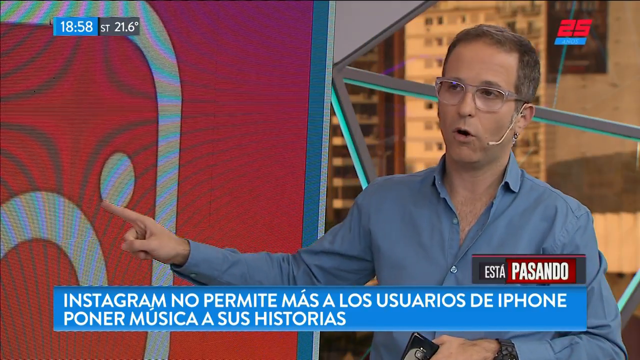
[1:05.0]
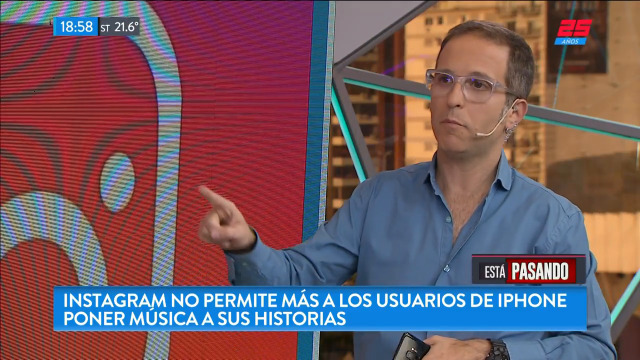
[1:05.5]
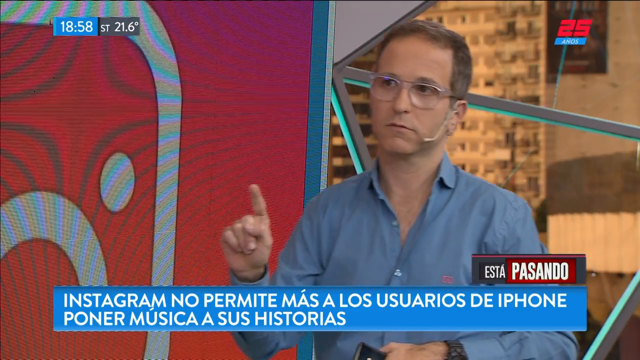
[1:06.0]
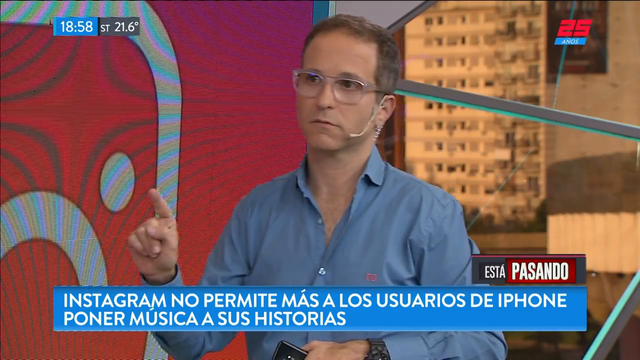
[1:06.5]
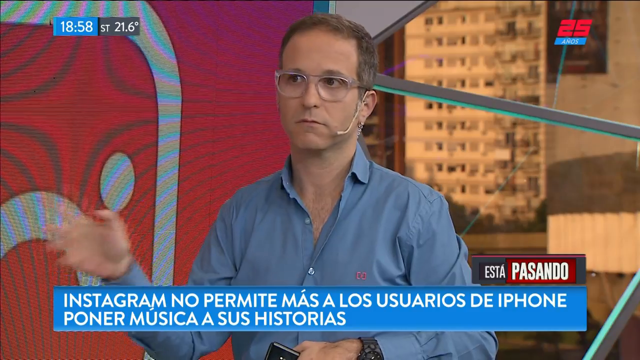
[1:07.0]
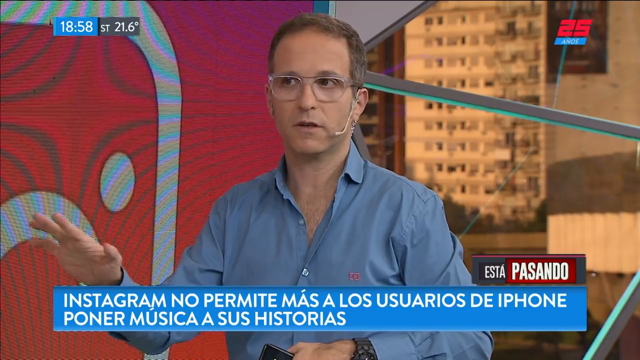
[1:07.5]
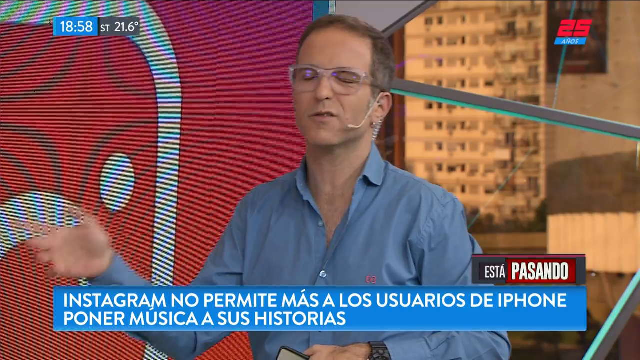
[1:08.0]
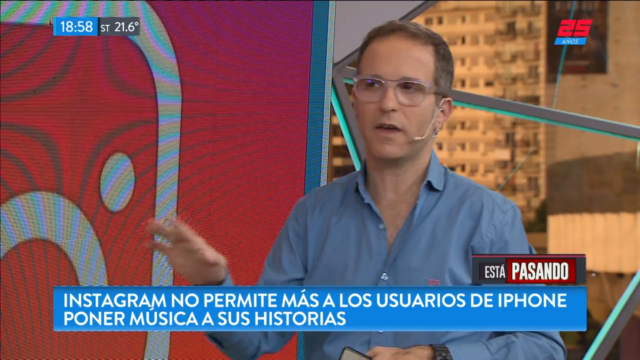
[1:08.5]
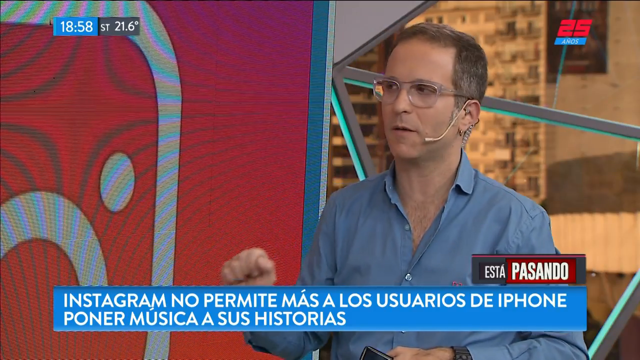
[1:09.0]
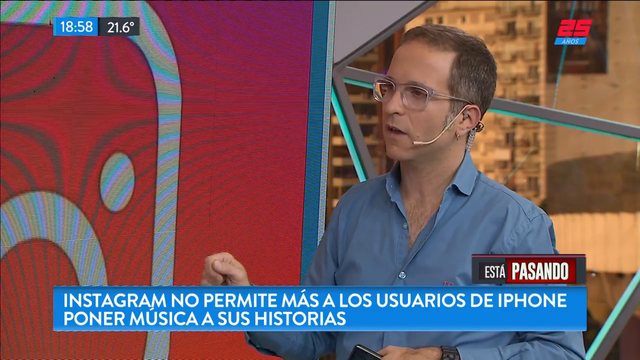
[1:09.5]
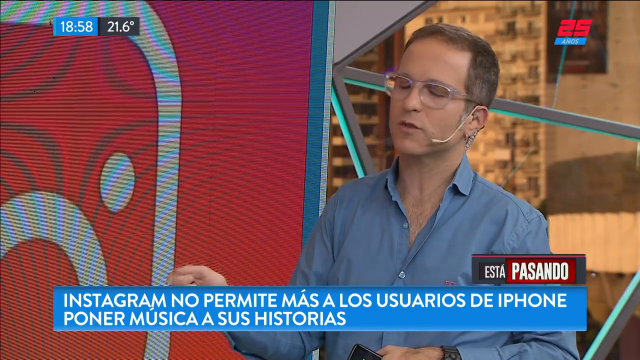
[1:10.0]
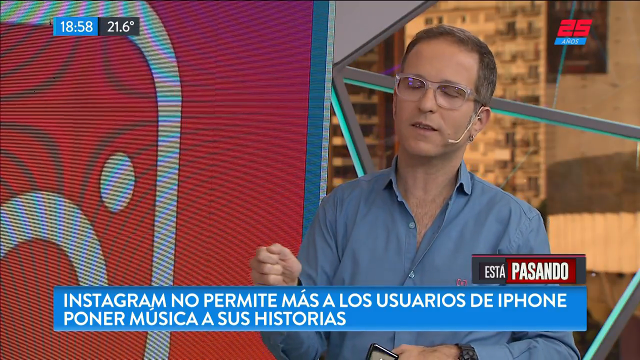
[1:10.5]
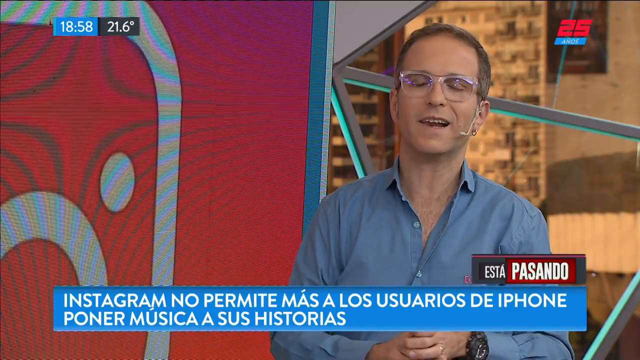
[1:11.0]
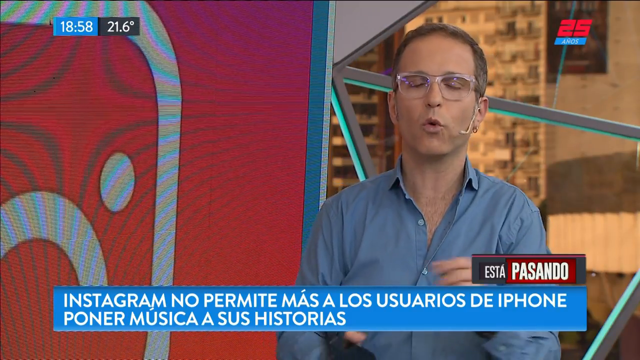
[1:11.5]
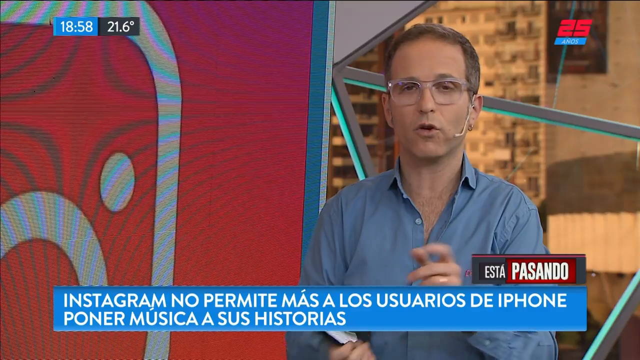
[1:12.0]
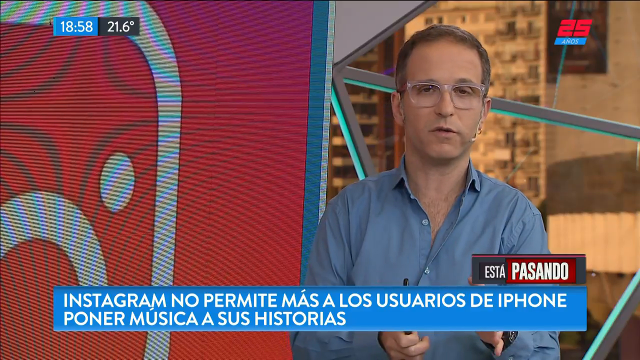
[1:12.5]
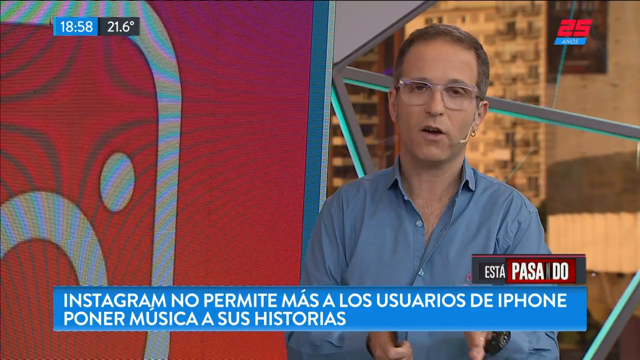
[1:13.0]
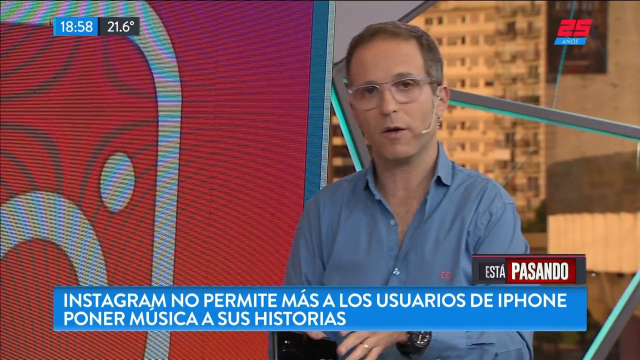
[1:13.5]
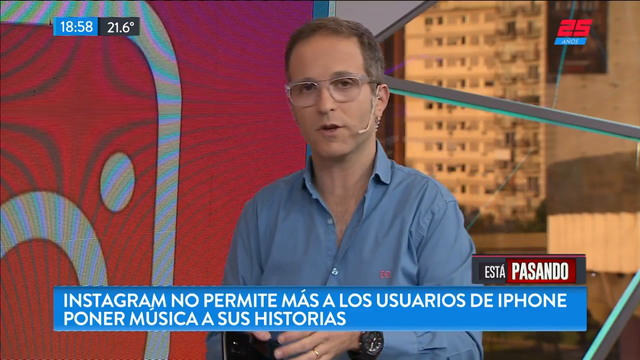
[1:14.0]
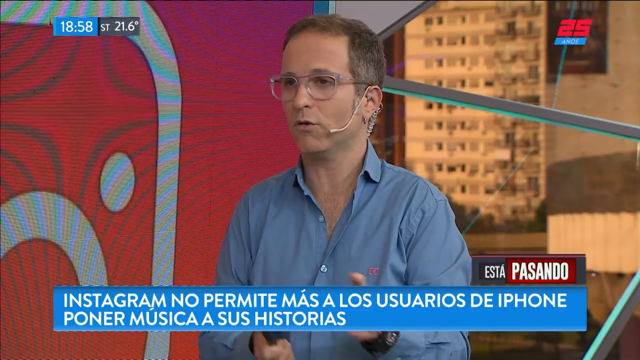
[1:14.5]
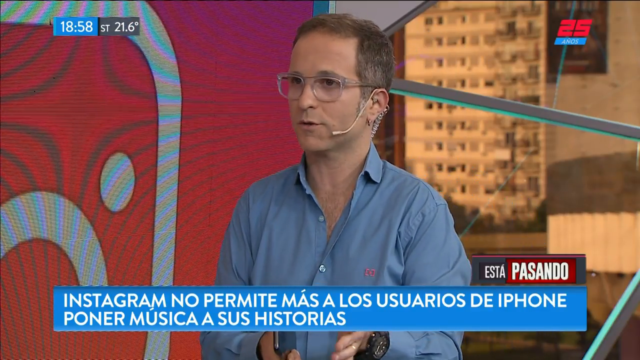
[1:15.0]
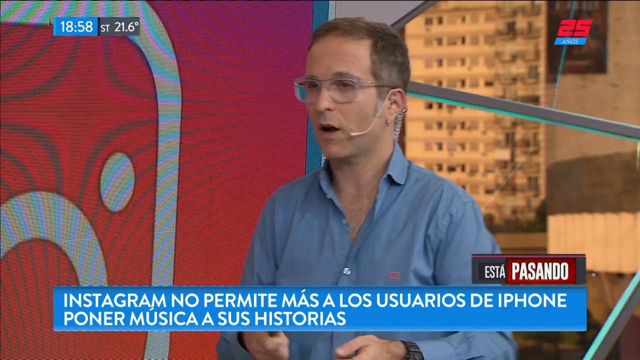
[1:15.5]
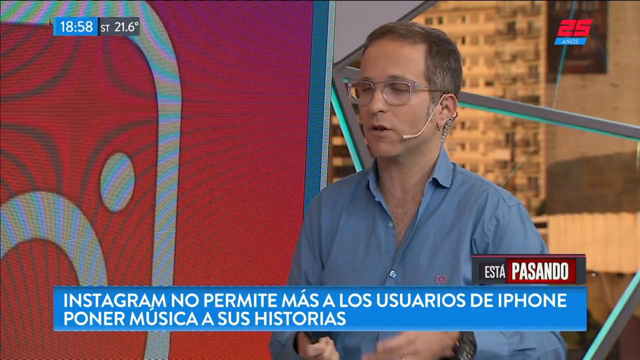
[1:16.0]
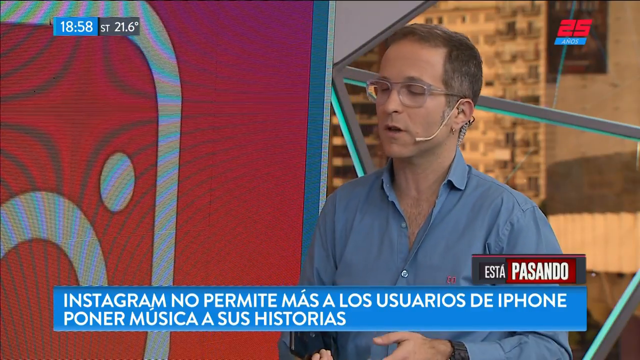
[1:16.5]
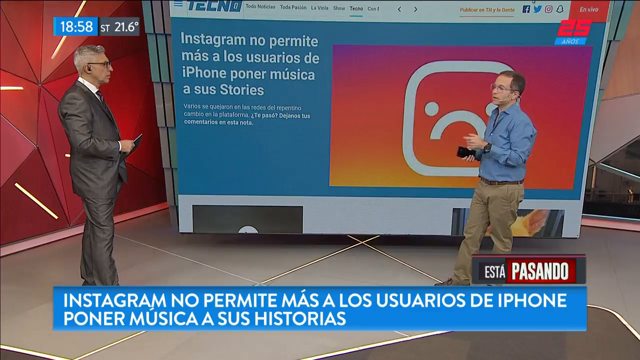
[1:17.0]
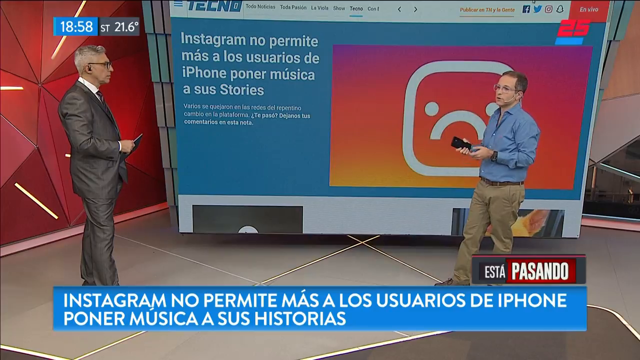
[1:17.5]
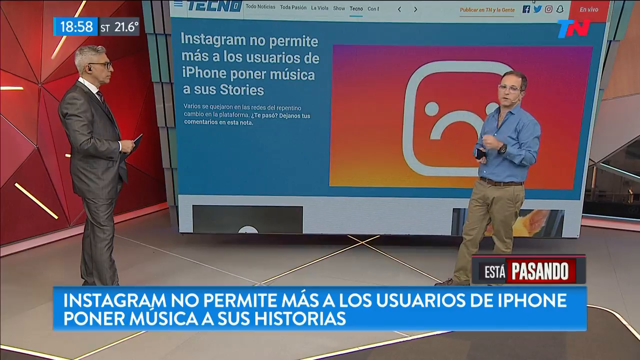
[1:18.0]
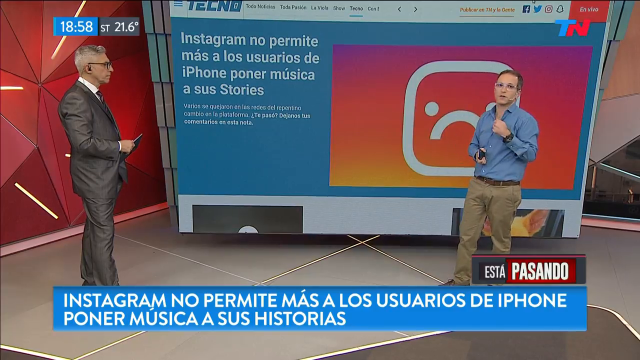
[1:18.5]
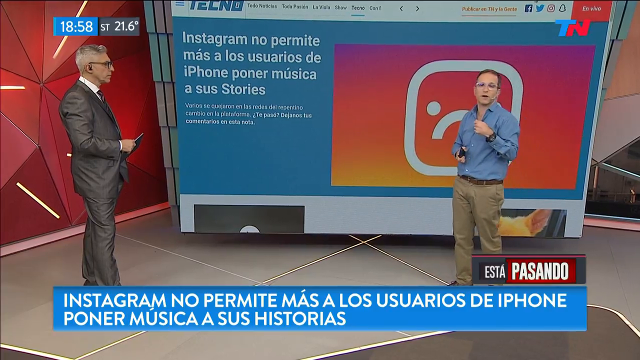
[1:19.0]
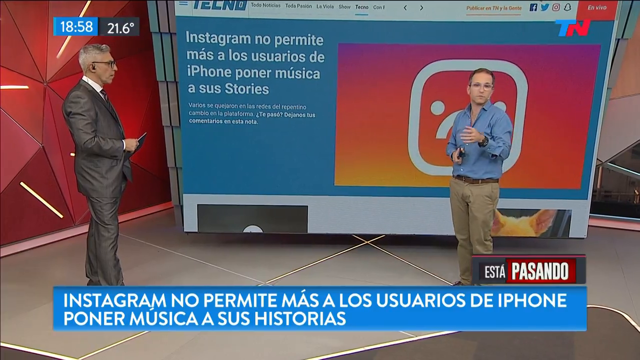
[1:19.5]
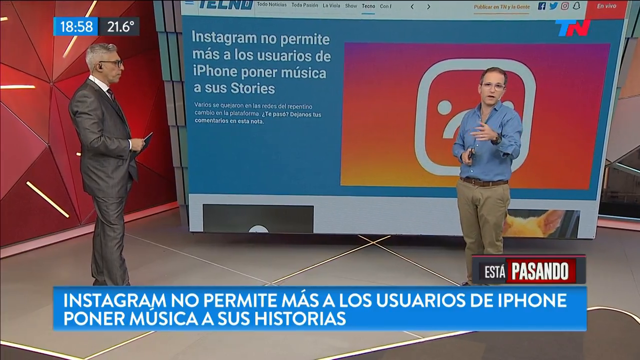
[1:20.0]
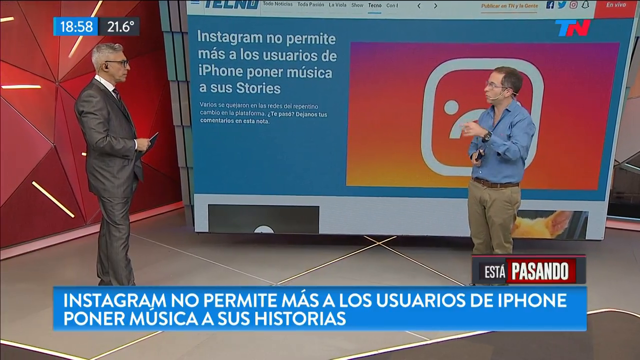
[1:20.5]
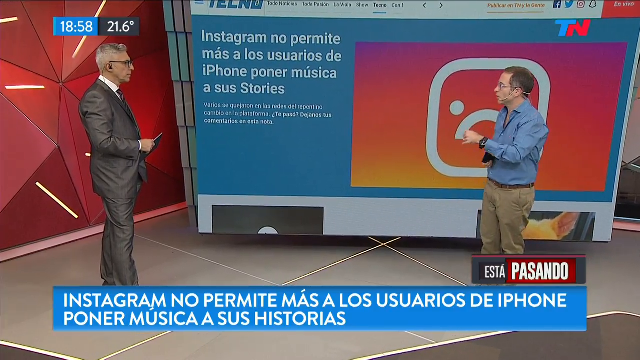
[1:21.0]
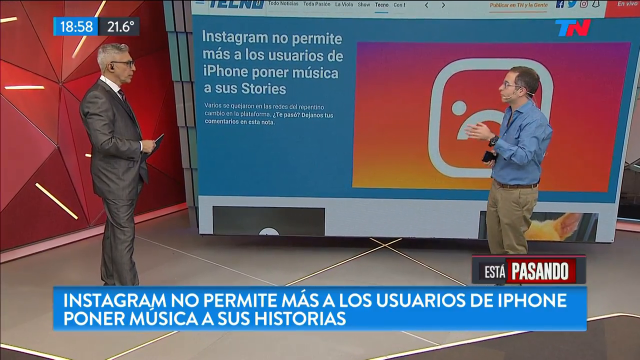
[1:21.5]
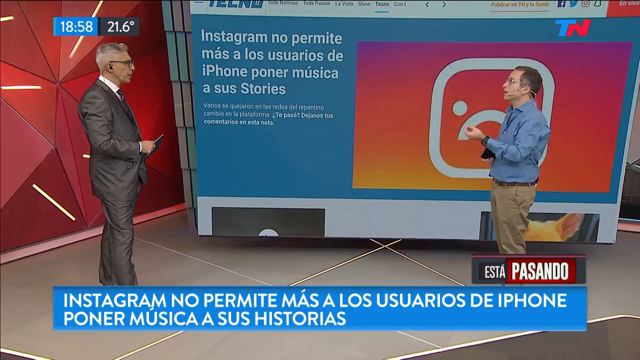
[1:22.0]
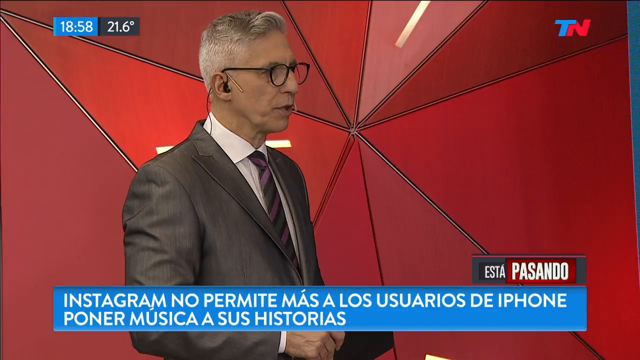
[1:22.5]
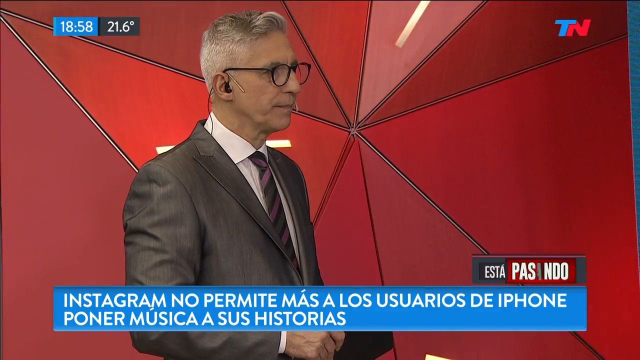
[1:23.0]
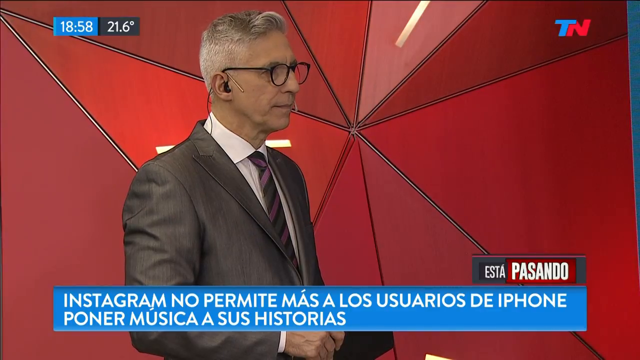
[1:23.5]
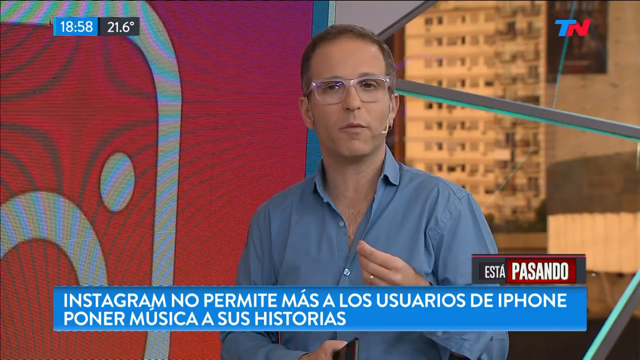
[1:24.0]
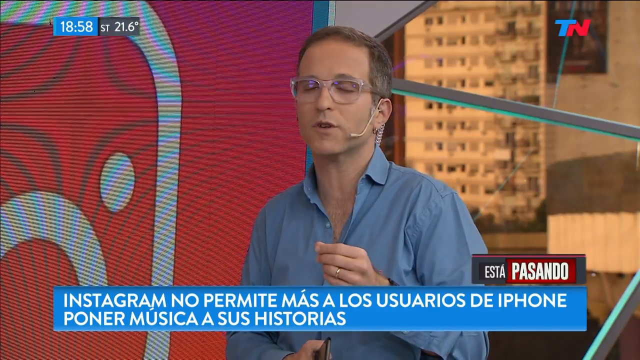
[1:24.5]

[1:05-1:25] Most of the shot shows the man in the blue shirt, khaki pants, watch and glasses, holding the phone, the expert talking about the story. The time reads 1858 with 21.6 degrees. The upper right alternates between a "25" logo and "TN". Through the window behind, what looks like a downtown area is visible. The camera also zooms out a bit to show the news anchor in a dark-colored suit, also wearing glasses, with the studio's red wall behind him. In a close-up of the anchor, he appears to be saying something to the man in the blue shirt, so there is a little conversation, though the man in the blue shirt does most of the talking.